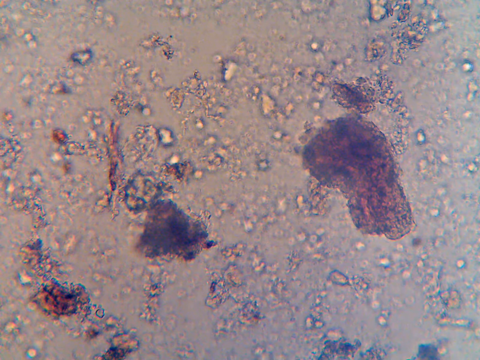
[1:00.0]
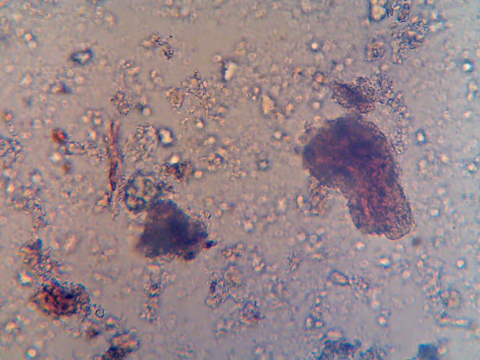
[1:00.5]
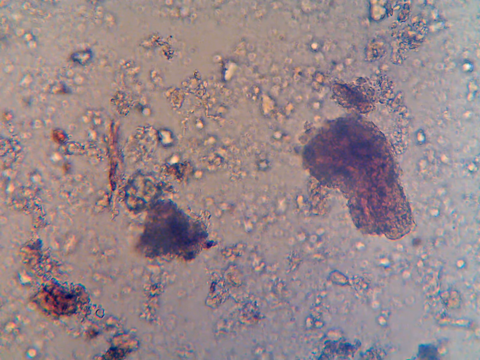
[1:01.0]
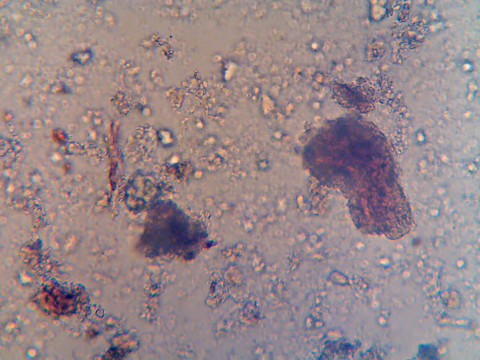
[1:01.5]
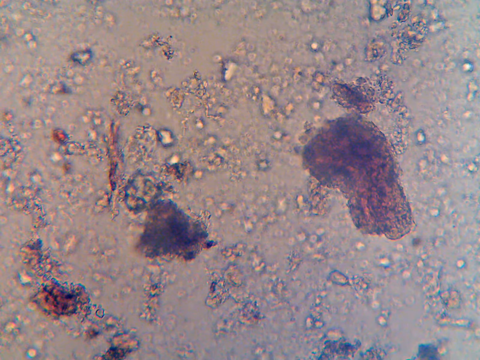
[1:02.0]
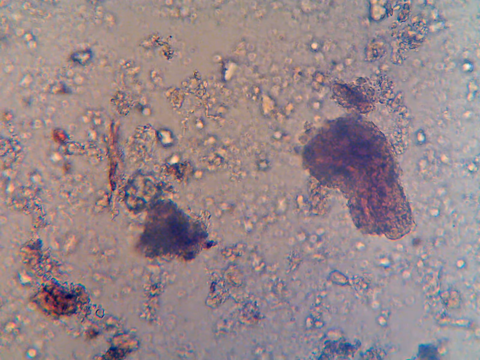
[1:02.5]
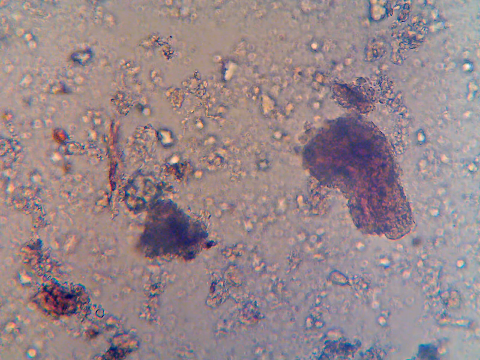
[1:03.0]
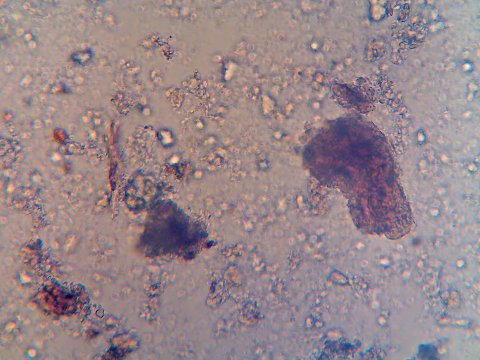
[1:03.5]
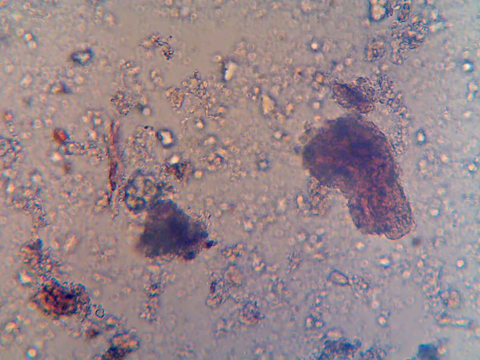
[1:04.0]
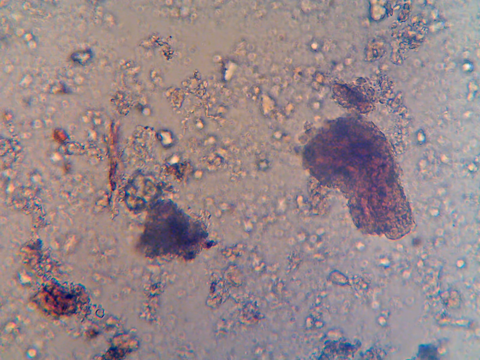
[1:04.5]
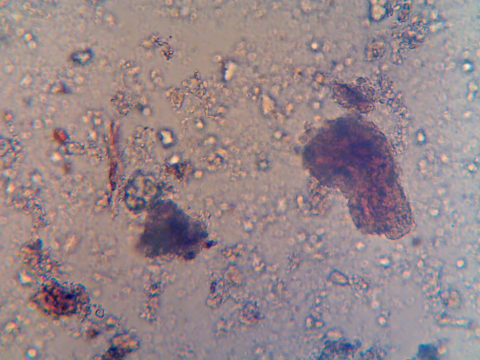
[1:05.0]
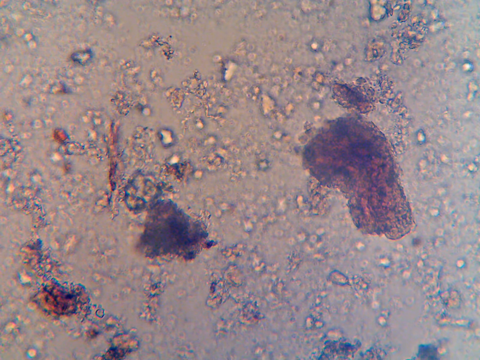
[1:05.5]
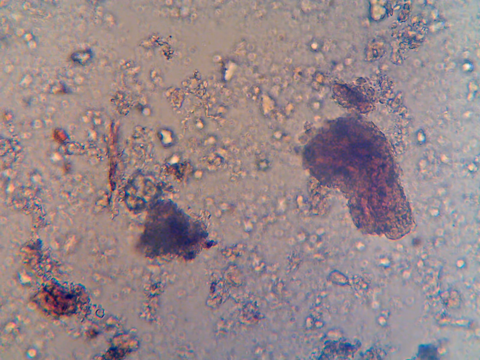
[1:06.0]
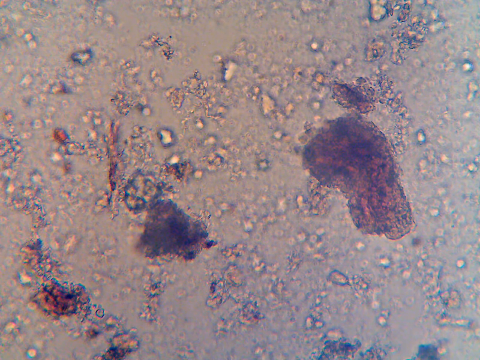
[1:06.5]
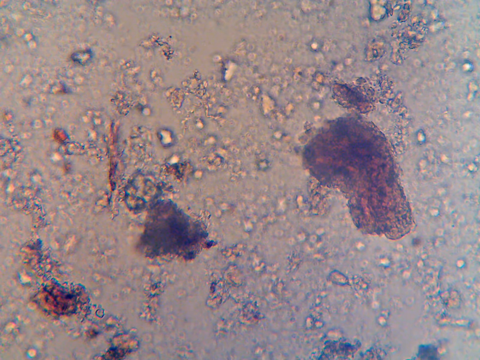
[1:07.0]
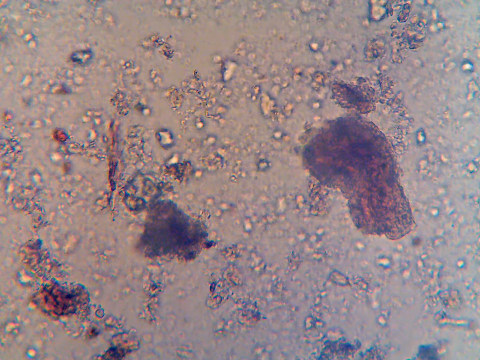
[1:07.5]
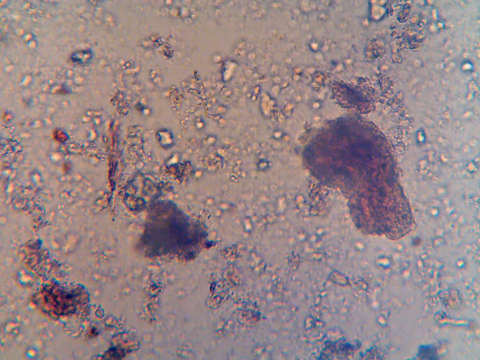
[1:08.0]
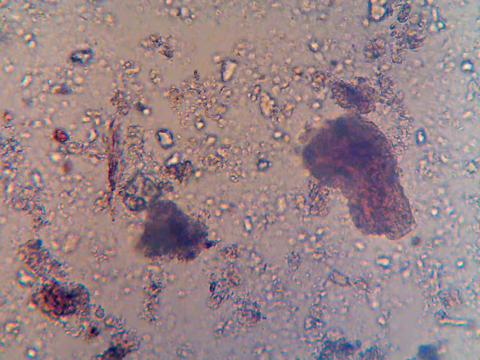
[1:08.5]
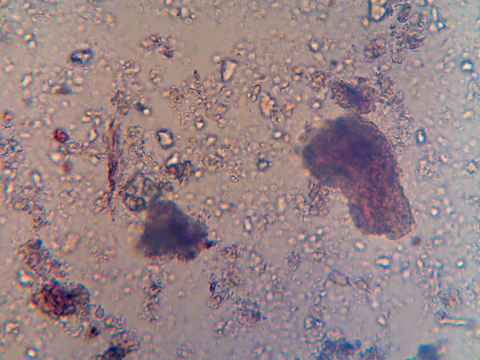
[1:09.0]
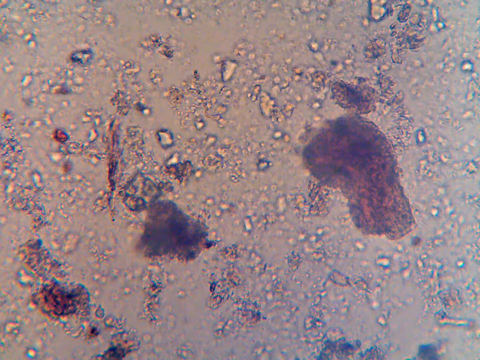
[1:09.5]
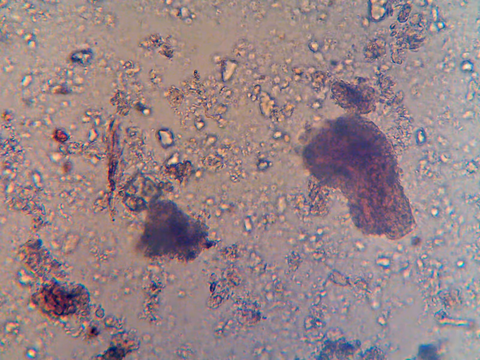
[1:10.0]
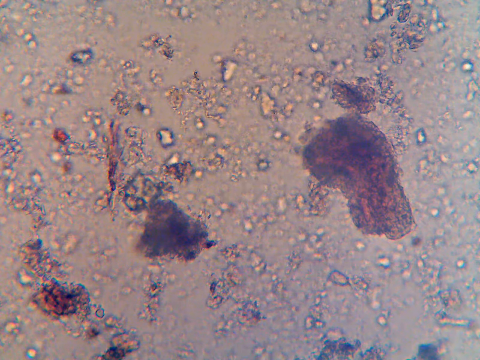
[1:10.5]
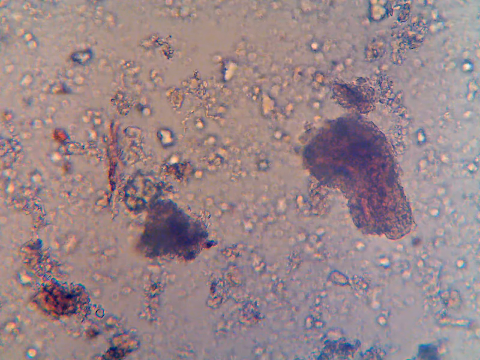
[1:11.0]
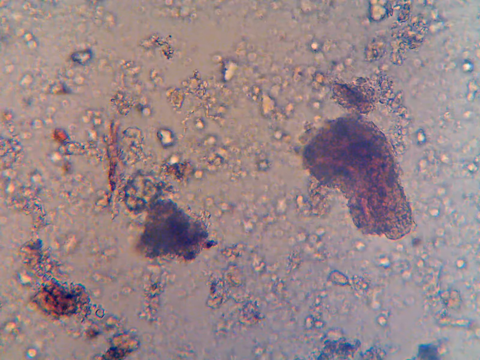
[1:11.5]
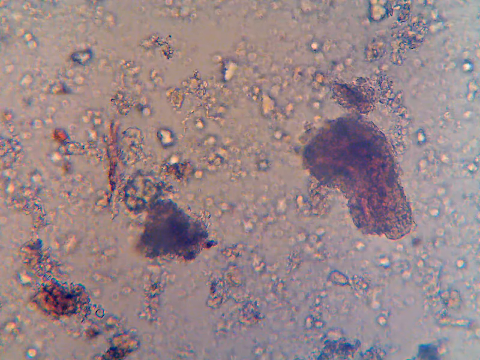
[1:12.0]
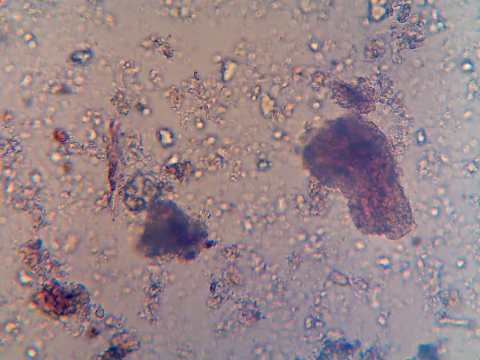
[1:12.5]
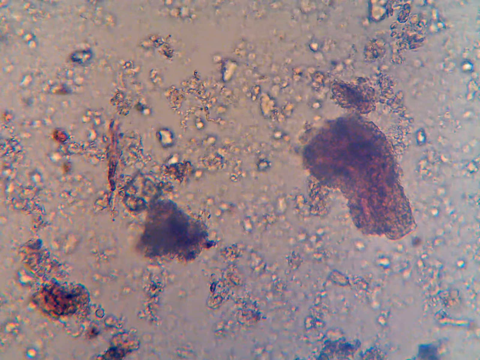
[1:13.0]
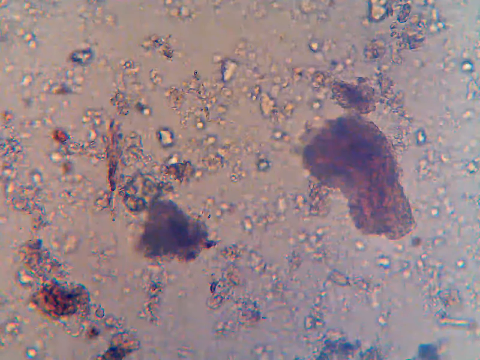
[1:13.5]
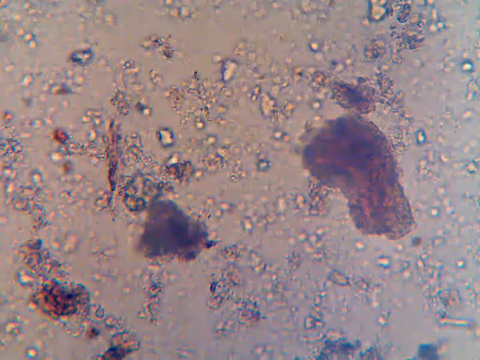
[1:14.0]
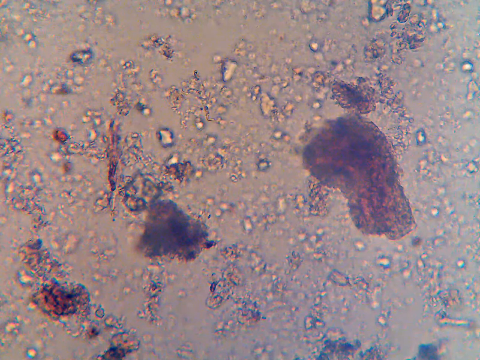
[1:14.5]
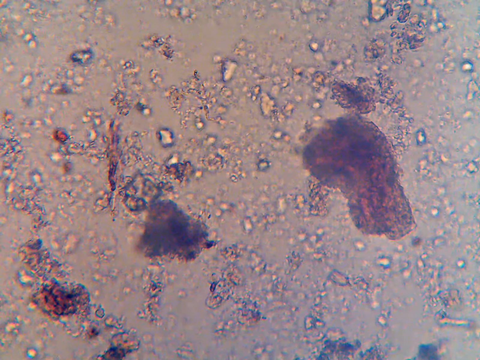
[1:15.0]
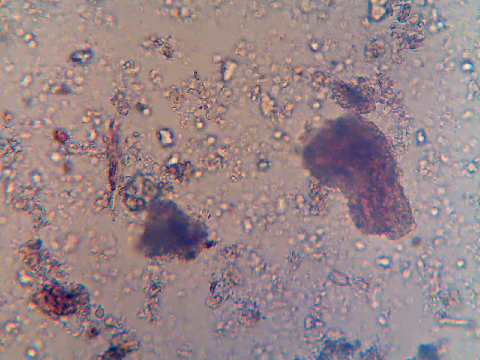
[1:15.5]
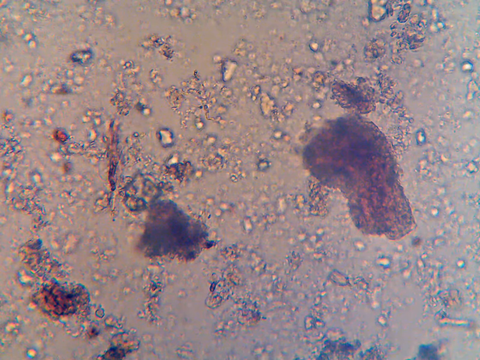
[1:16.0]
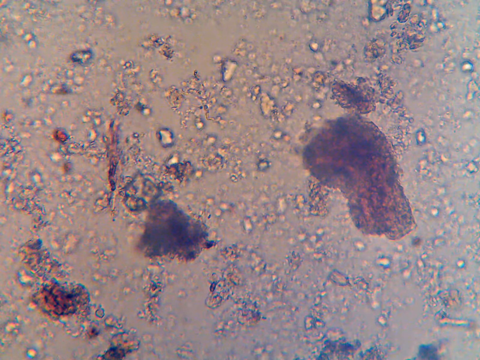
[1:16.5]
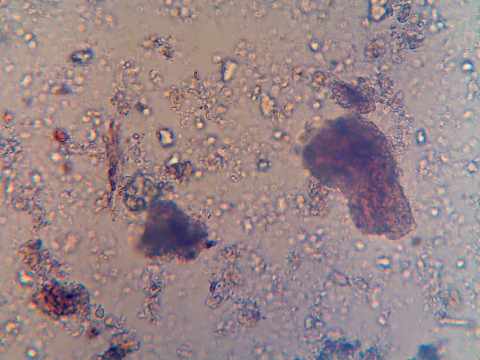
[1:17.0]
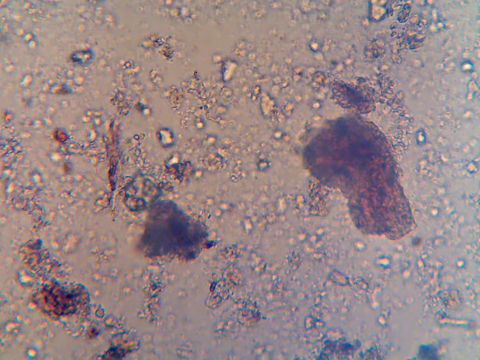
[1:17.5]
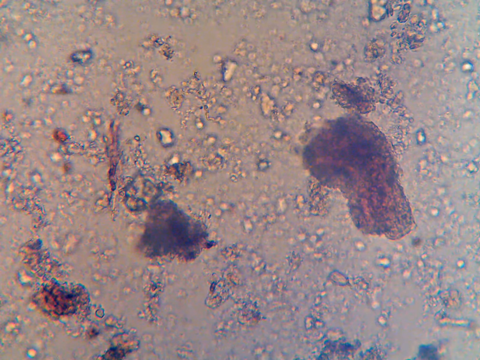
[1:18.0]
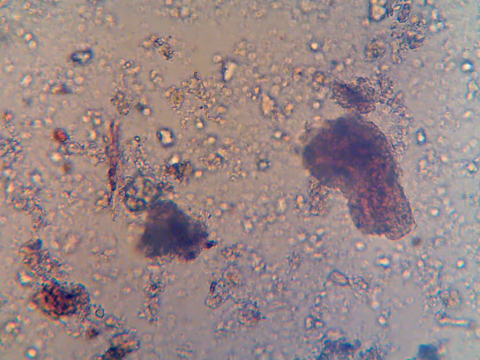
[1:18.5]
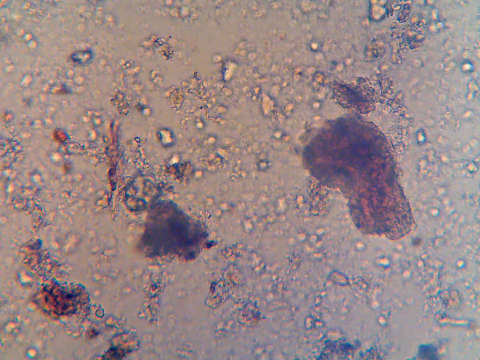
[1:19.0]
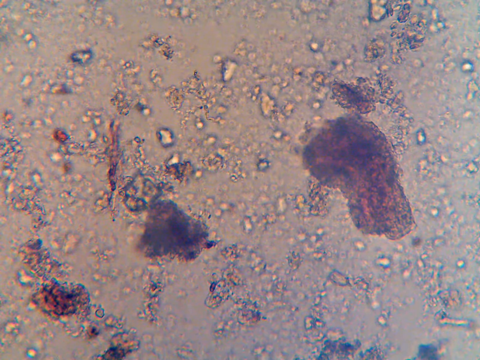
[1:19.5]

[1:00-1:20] The video apparently shows a sample viewed through some kind of electronic microscope. Little happens: there seems to be a little movement, and the microscope's camera seems to change focus slightly. The sample has a beige-brown background with lots of brown blobs, most of them very similar in color to the background. About three areas stand out. At the bottom right is a larger area that looks like many little orange and black dots, maybe the size of 50 of the normal bubbles. Slightly above and to the right of it is a triangular blob in a much darker black or purplish color. Further to the right and slightly higher is an even larger area in a very similar dark black or purple color, with maybe some orange or red areas within it, and shaped kind of like a bean.